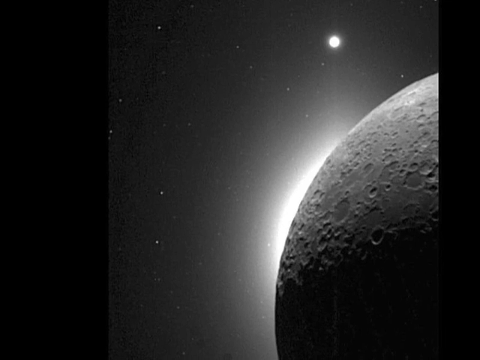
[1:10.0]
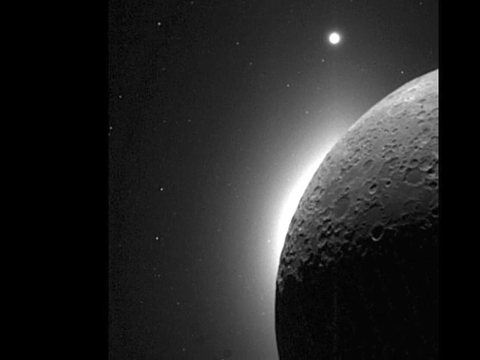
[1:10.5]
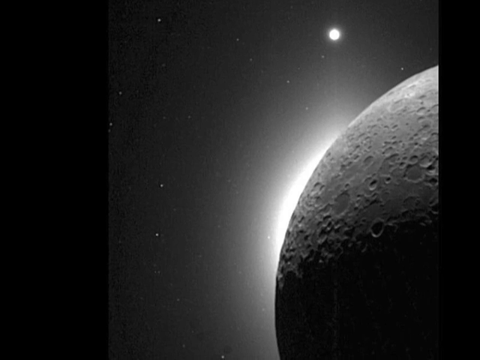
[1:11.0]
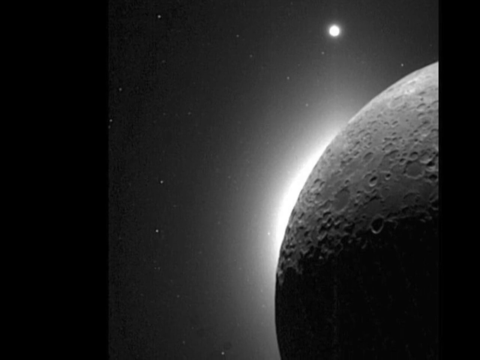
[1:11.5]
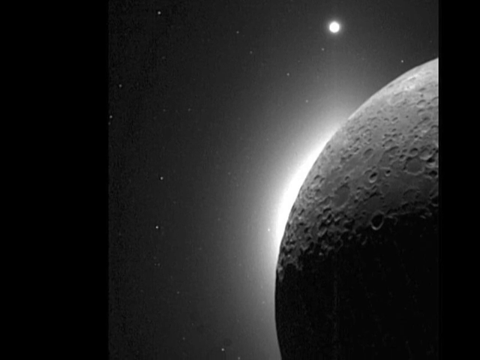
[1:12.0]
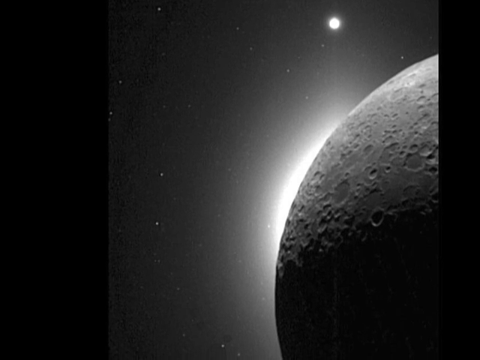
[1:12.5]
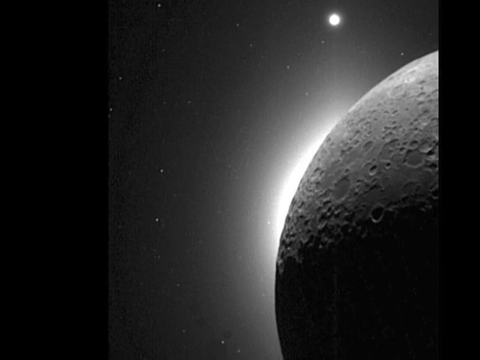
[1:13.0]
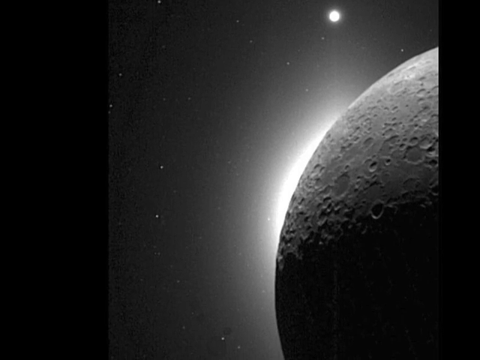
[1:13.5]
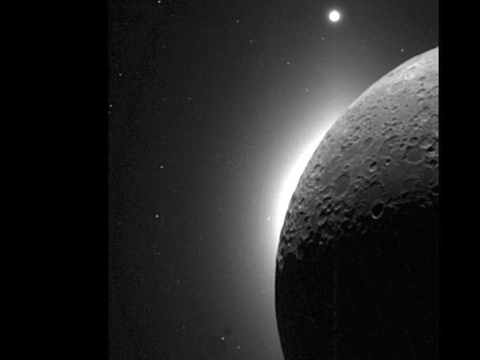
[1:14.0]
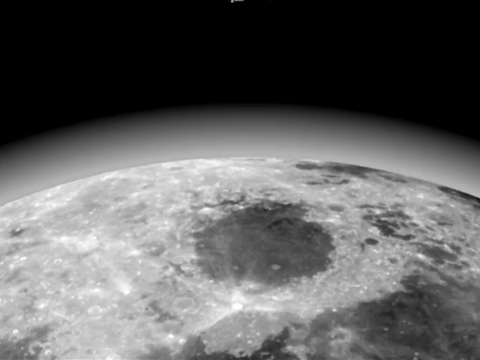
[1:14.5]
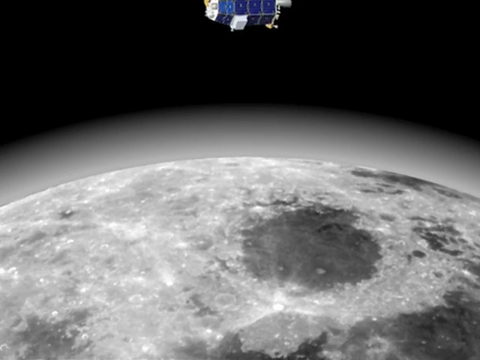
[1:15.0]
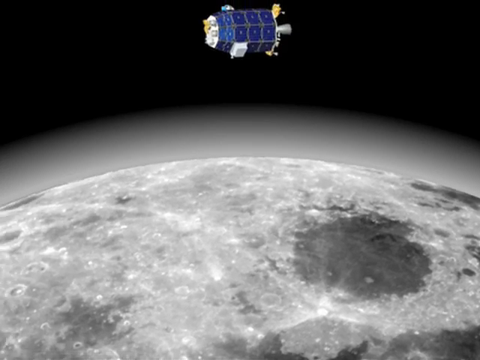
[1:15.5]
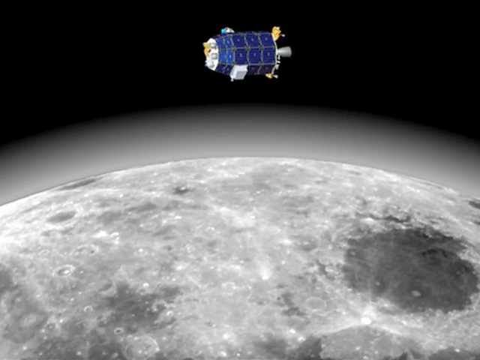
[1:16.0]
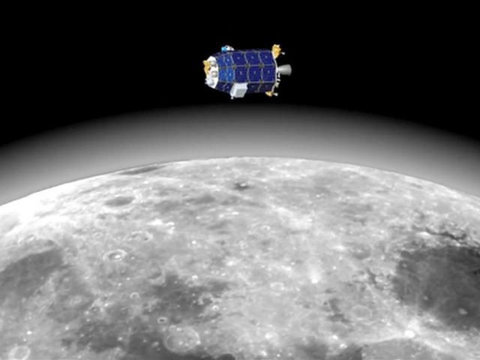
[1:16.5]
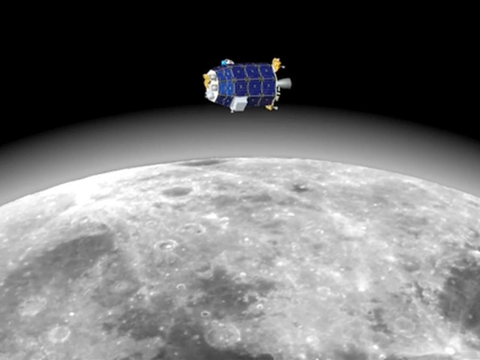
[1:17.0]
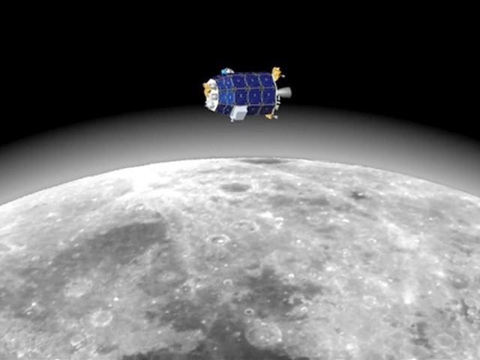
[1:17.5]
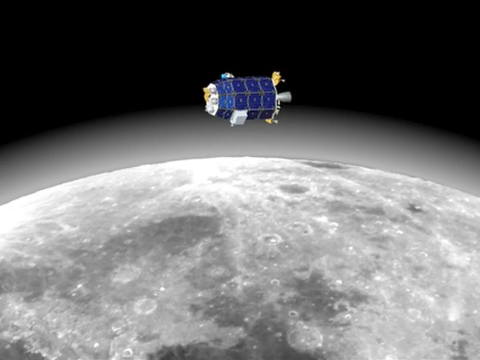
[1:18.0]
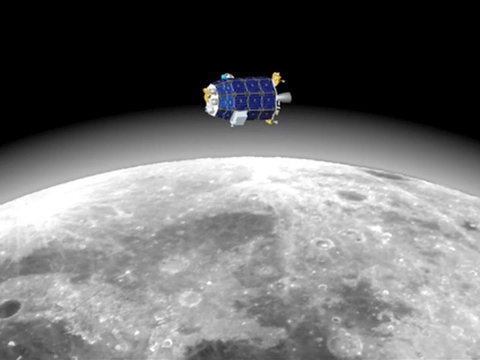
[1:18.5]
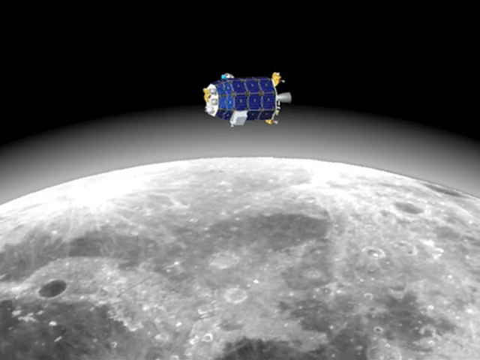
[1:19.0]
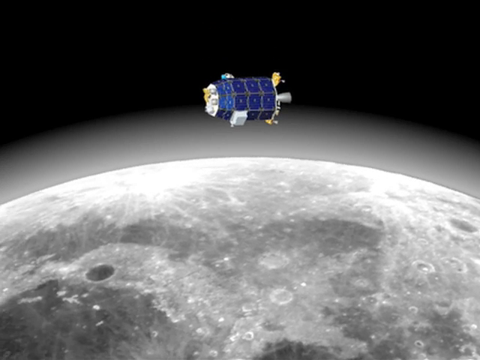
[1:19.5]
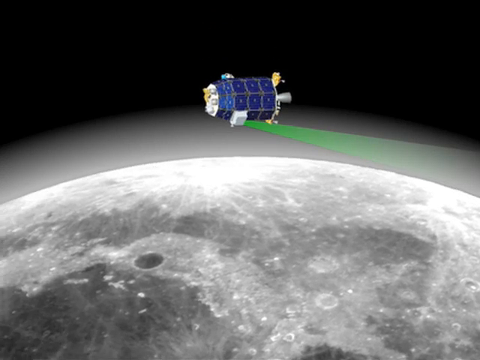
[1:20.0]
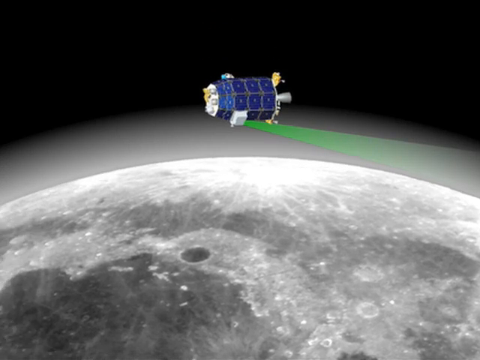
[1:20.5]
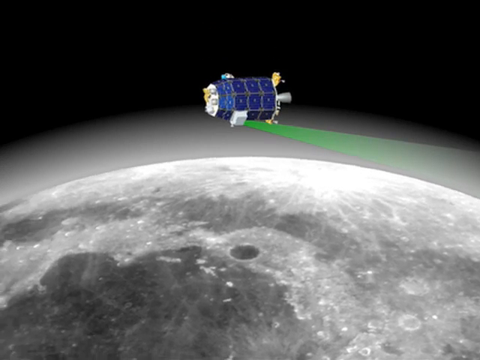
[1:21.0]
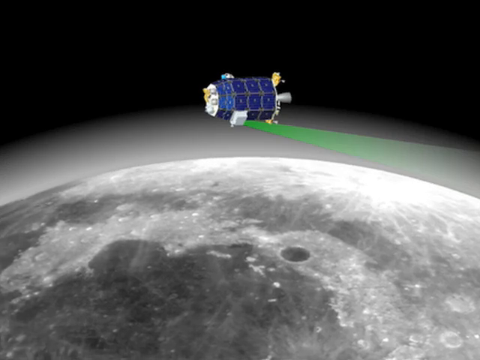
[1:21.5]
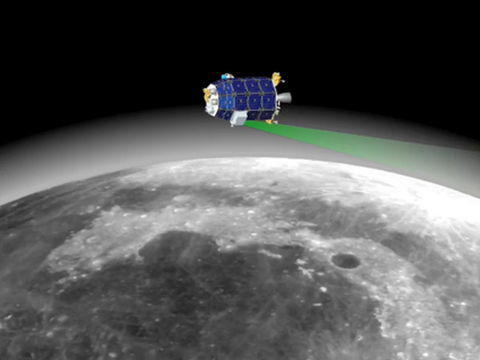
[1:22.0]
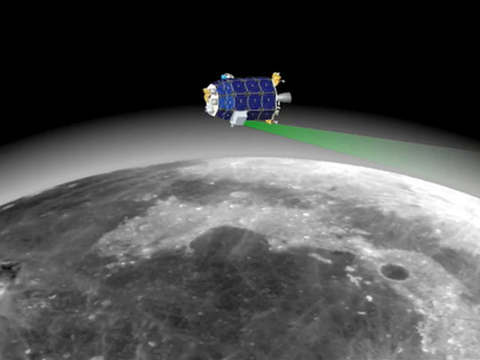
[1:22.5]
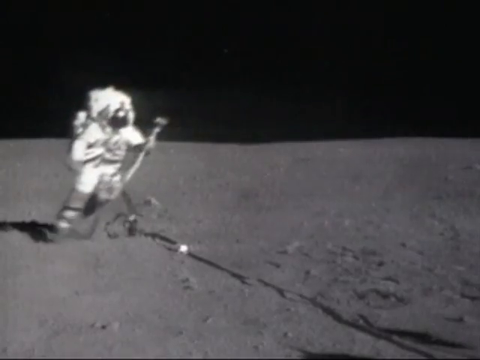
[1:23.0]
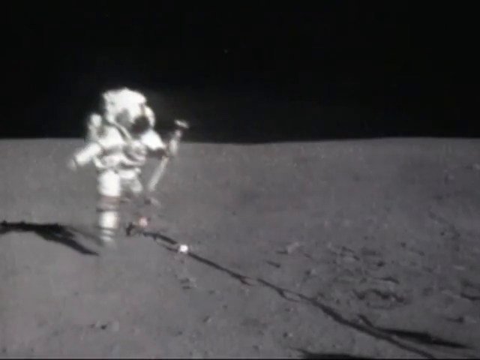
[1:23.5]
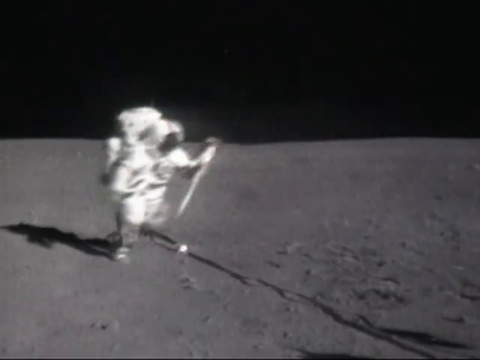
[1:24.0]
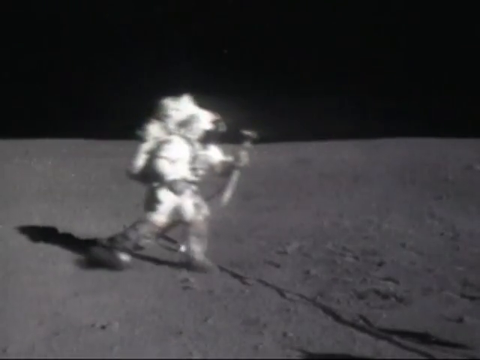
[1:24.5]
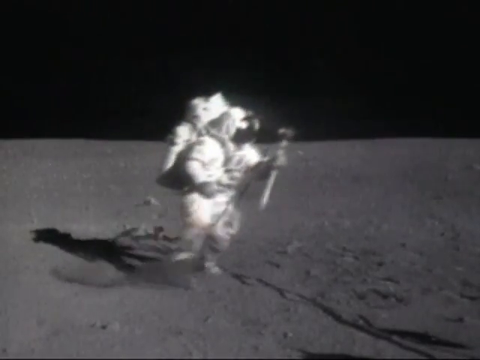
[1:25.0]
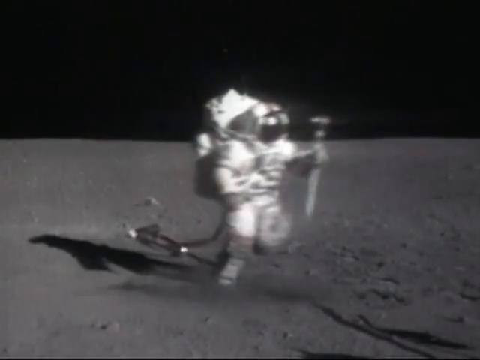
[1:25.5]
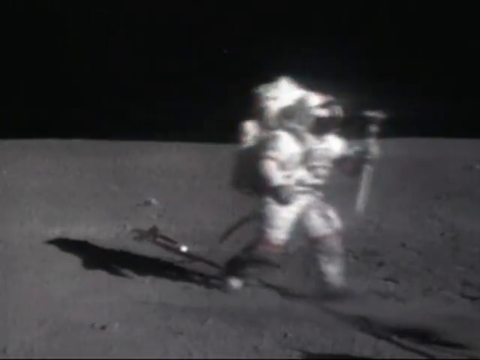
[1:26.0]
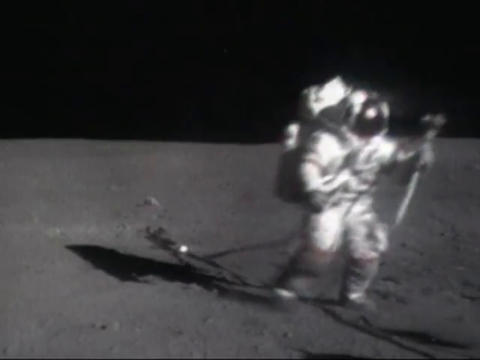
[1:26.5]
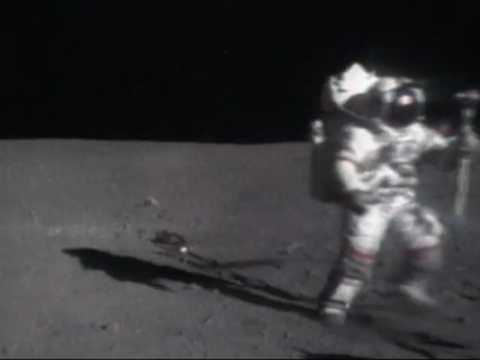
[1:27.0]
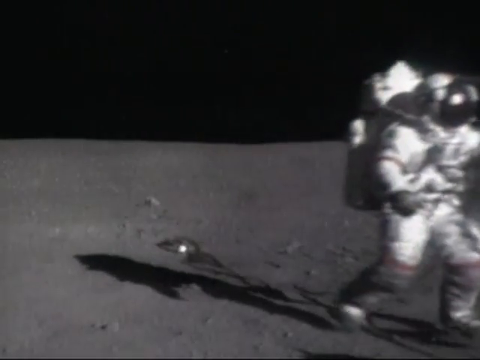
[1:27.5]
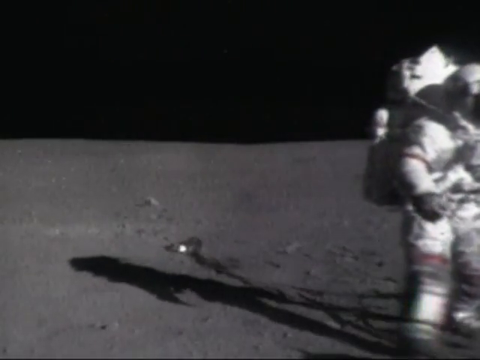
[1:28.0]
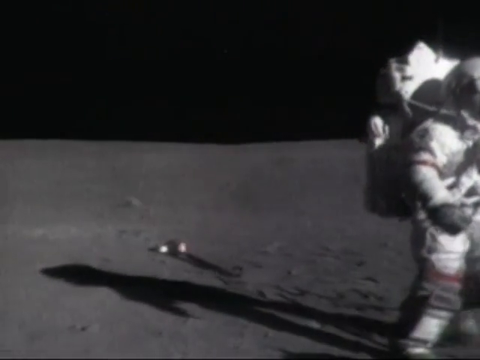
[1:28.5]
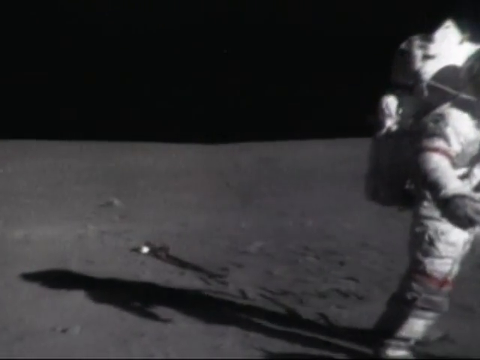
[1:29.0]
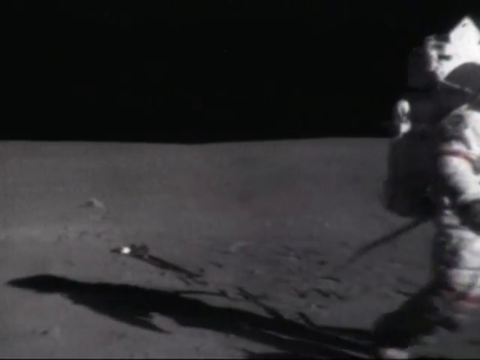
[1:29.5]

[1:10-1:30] An aerial view of the moon is shown again, with some type of bright light around it. Far away there is a little orb of bright light, possibly the sun, and little lights of stars, perhaps the Milky Way. The scene switches to the moon with a rotating circle, like a gravitational pull. What appears to be part of the space rocket that was launched is orbiting the moon, and a green light comes out of it. Then a black-and-white scene shows an astronaut walking on the moon. Because of the gear, the astronaut cannot be made out, but dirt kicks up when they walk and they cast a shadow. There appears to be a tether going behind him.